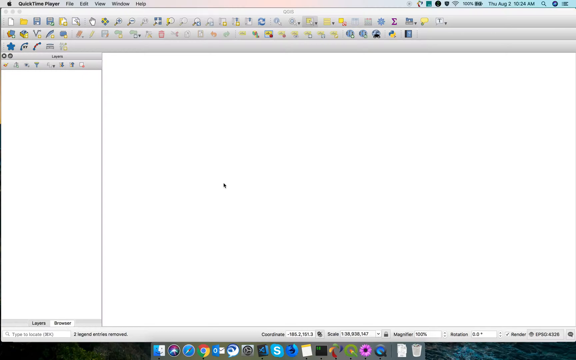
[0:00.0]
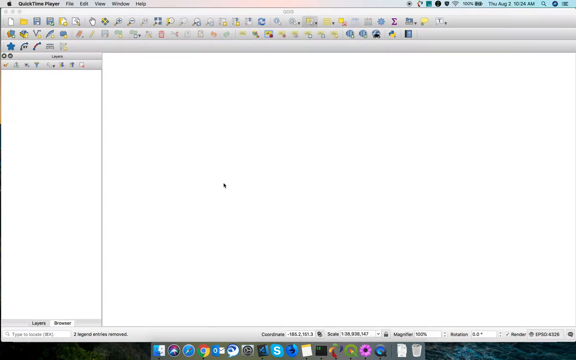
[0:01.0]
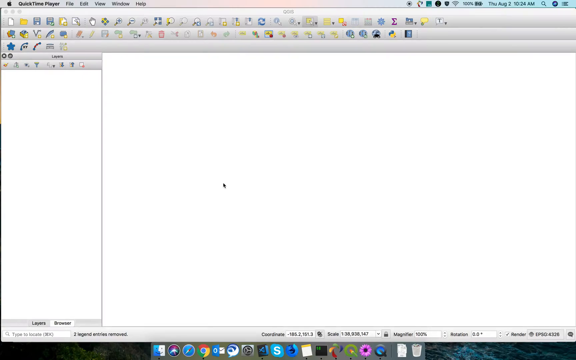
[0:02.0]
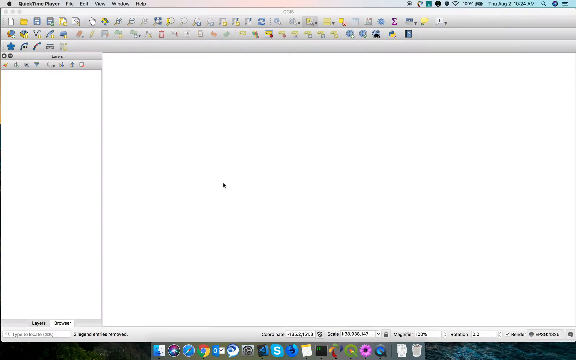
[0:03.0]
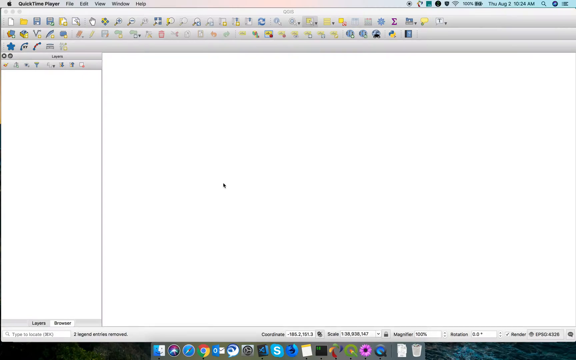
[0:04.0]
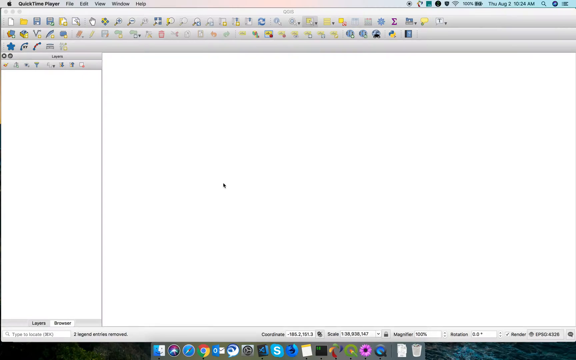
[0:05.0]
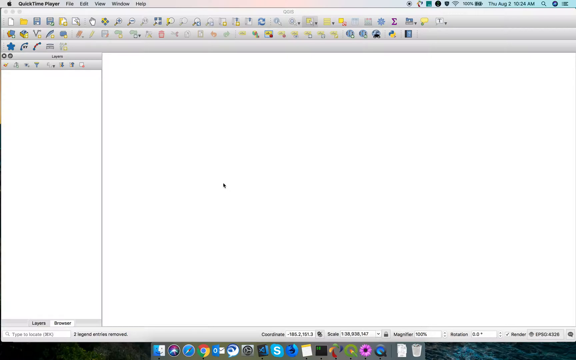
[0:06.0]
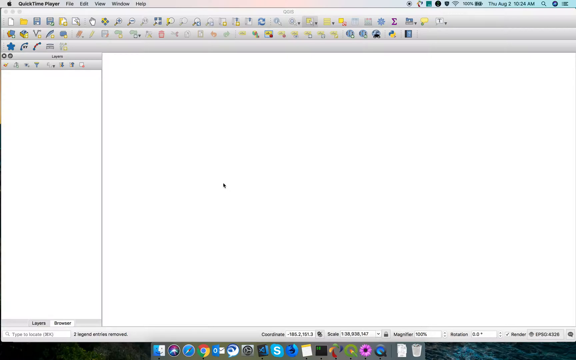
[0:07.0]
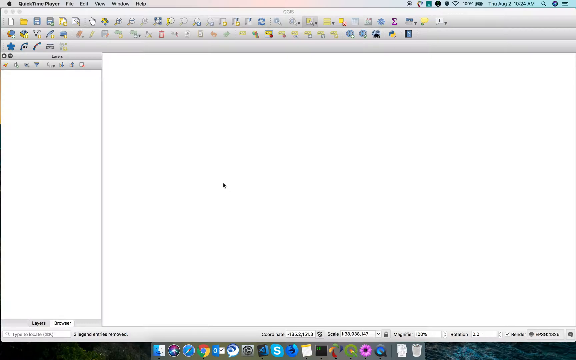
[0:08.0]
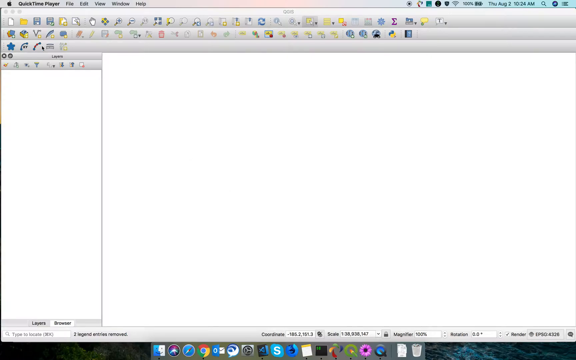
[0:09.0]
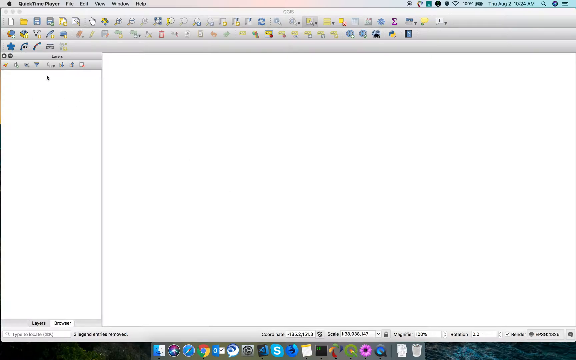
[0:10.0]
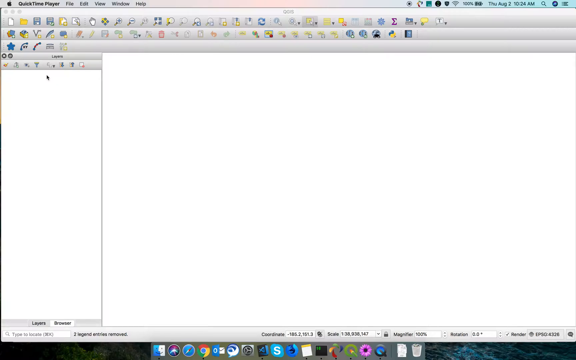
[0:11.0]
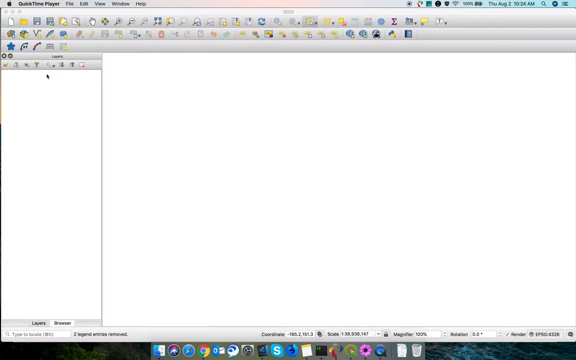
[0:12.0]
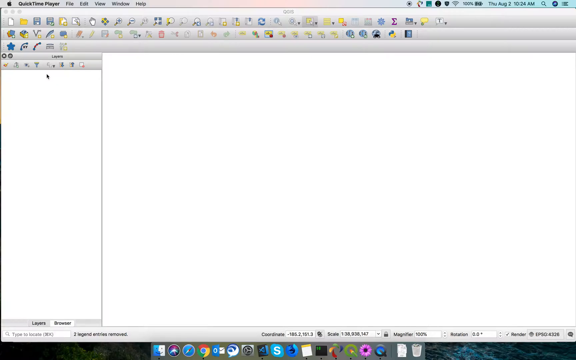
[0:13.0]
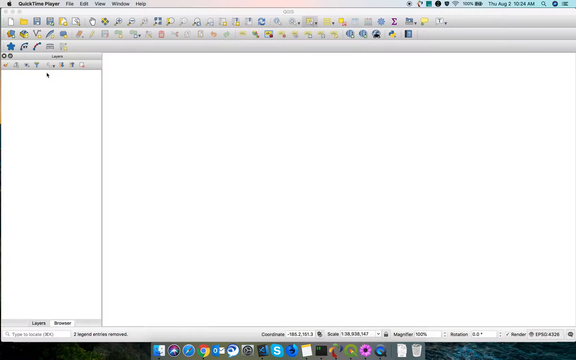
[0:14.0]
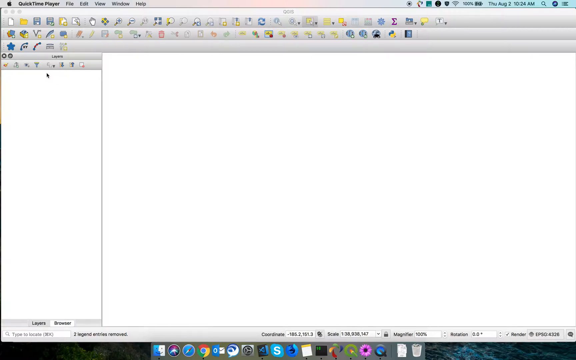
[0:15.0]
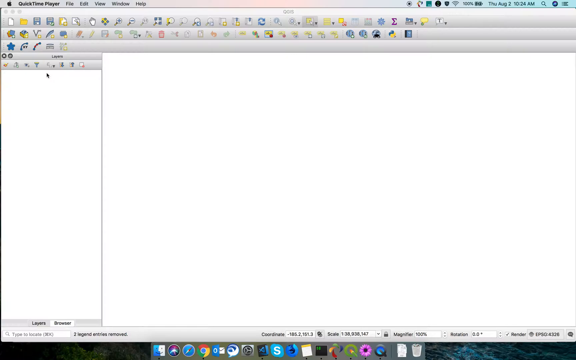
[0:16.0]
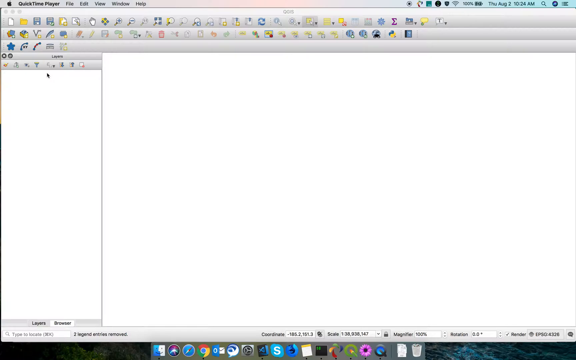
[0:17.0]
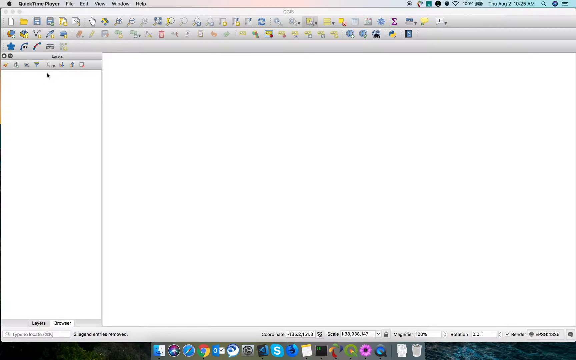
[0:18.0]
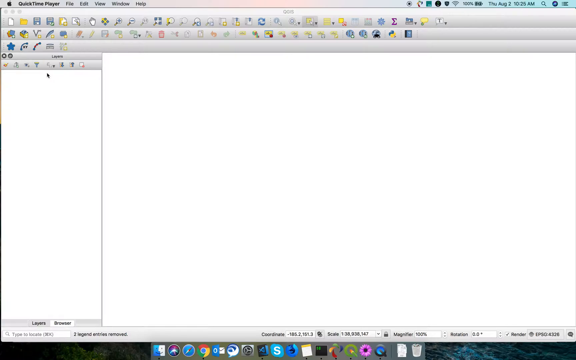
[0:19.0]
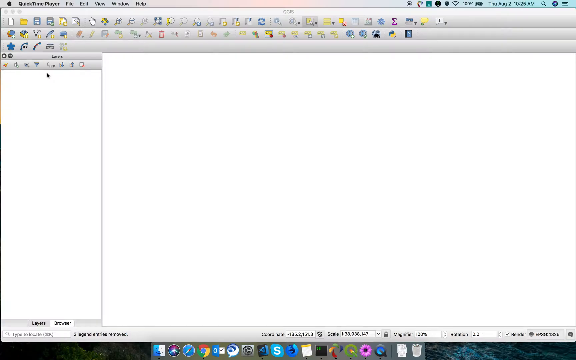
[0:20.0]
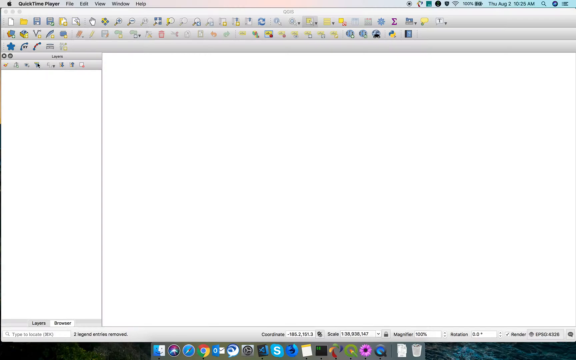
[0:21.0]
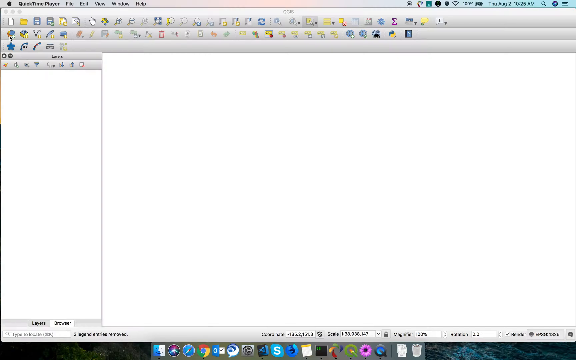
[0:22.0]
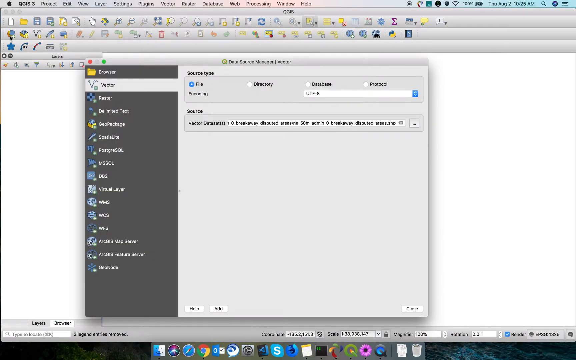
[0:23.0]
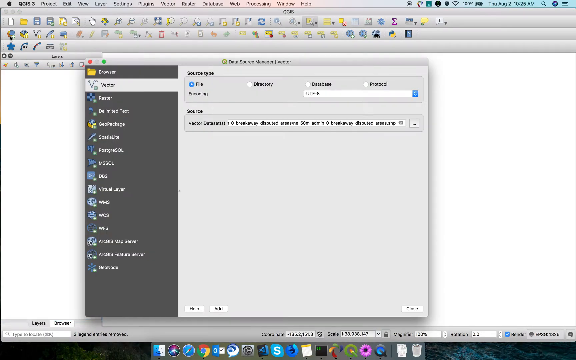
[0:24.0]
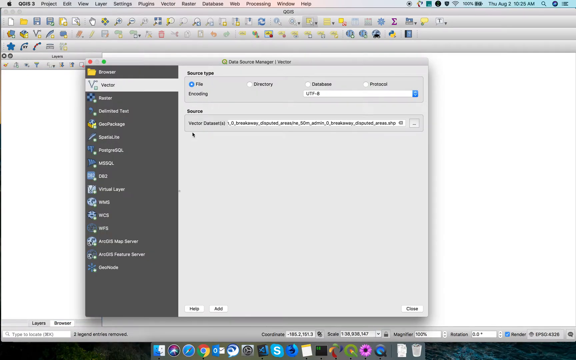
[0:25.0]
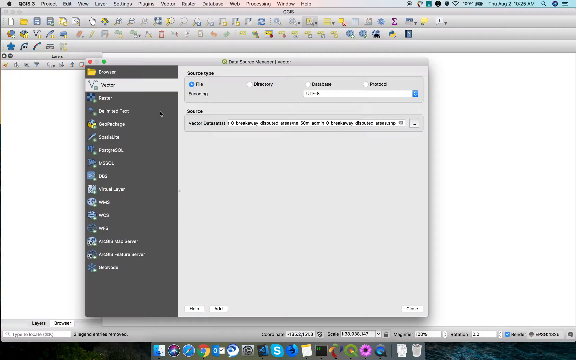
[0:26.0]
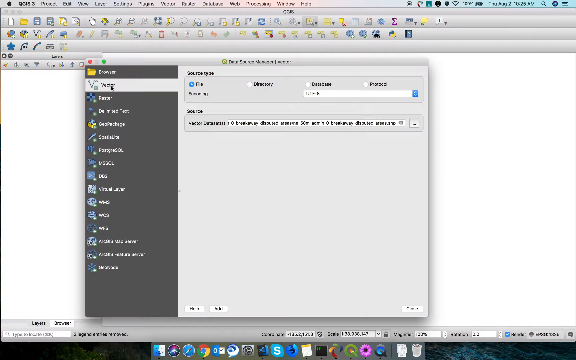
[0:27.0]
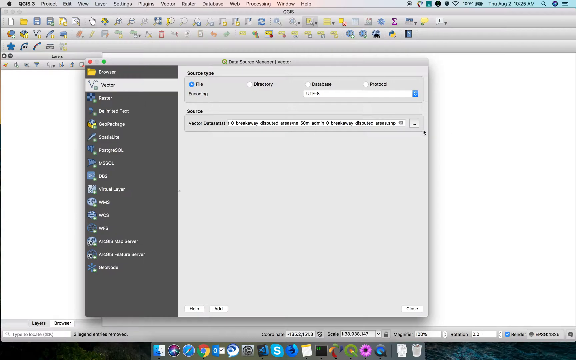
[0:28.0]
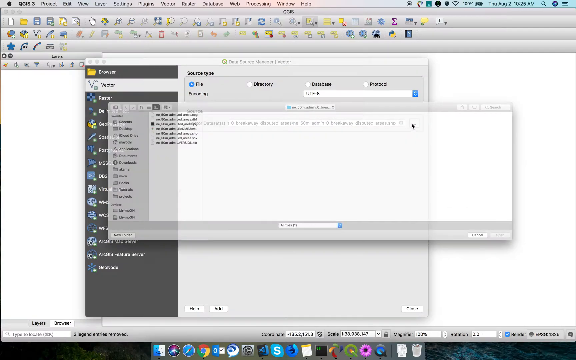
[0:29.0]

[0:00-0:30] A computer application is shown on a MacBook computer, along with a QuickTime player. The menu bar shows File, Edit, View, Window and Help, along with the date and time, Thursday, August 2nd, 10:24 AM. A wide variety of buttons appears, each with a different color and shape, representing different commands and functions within the app, which is mainly a music app. A save screen is then shown, where files can be saved. More features appear in a second and third row below the first row further down the page.